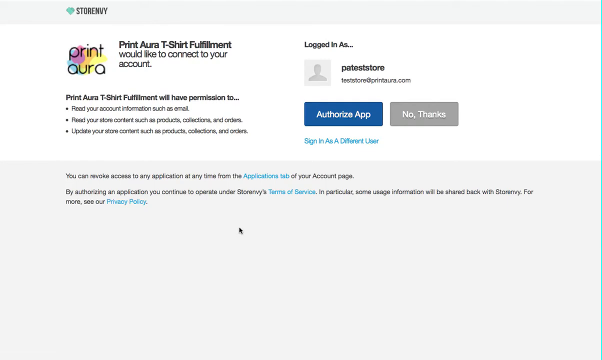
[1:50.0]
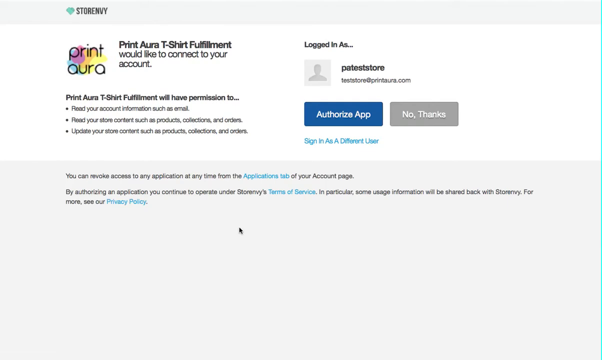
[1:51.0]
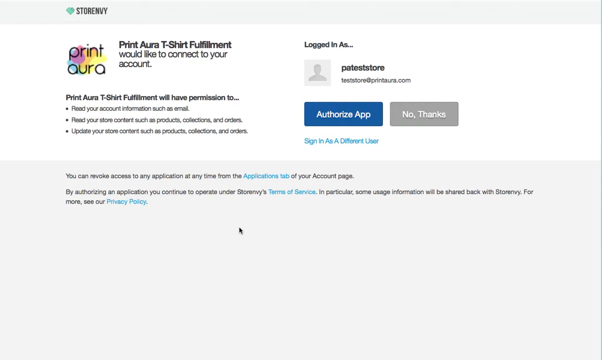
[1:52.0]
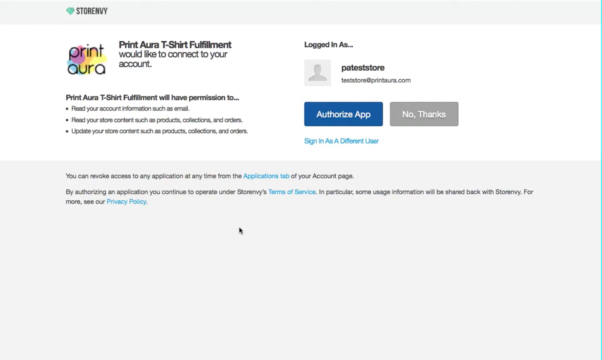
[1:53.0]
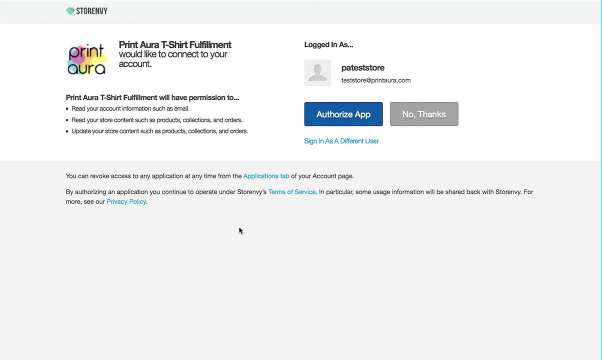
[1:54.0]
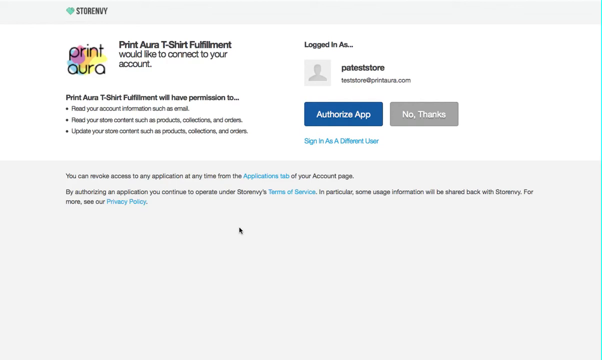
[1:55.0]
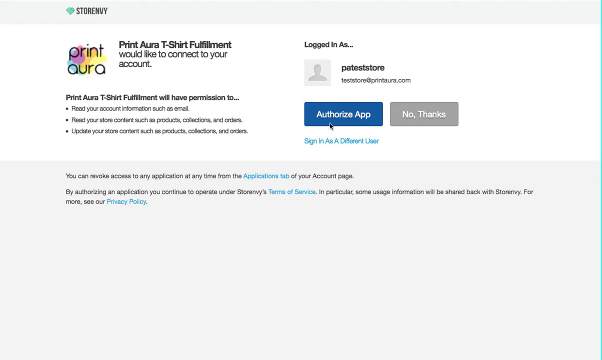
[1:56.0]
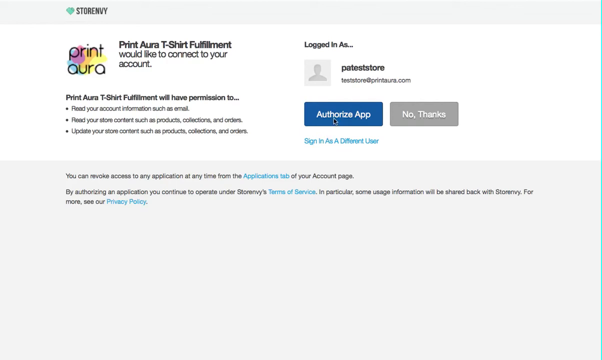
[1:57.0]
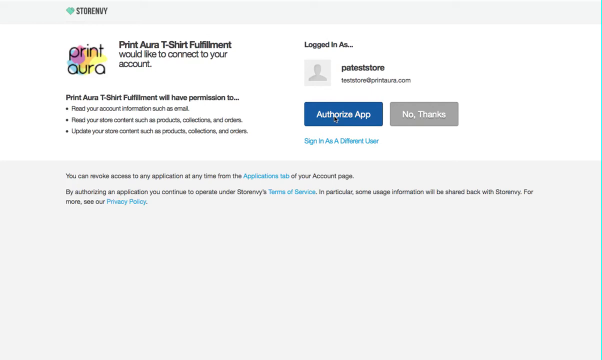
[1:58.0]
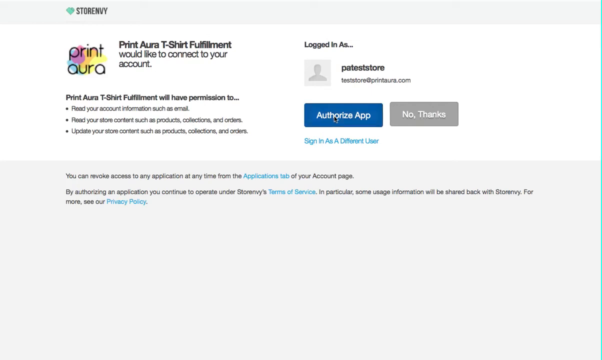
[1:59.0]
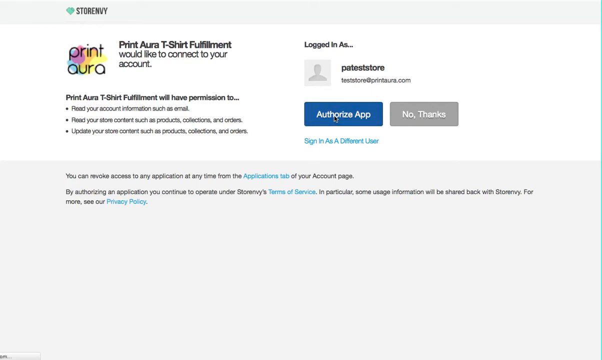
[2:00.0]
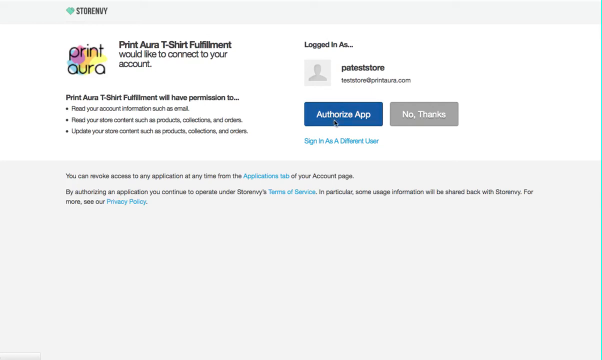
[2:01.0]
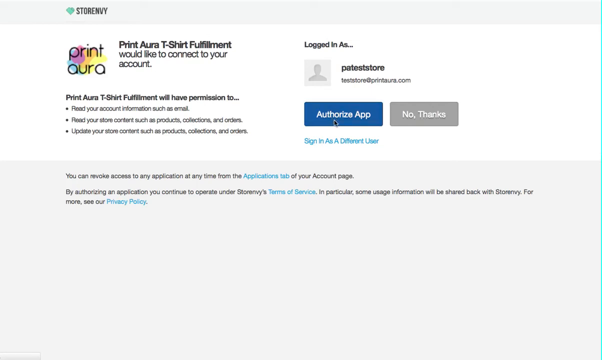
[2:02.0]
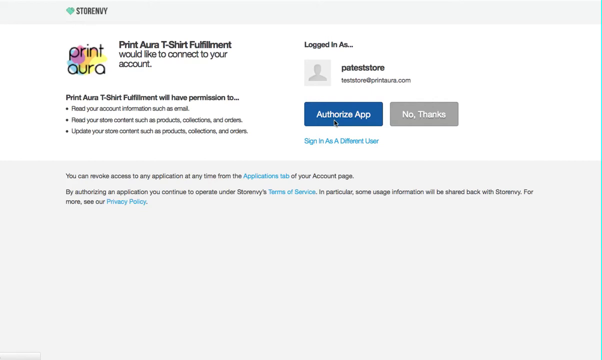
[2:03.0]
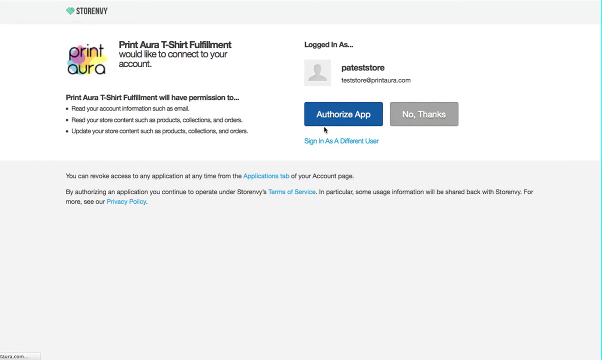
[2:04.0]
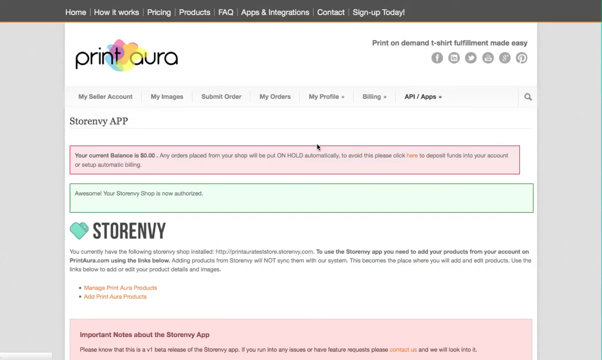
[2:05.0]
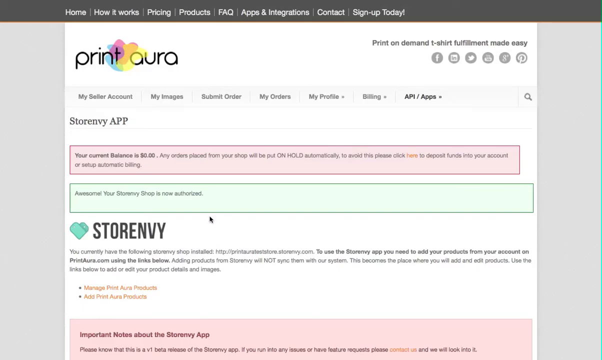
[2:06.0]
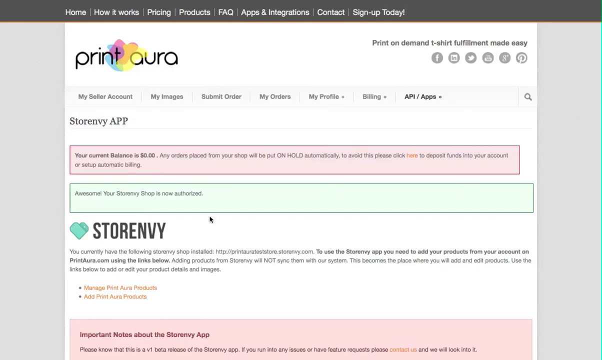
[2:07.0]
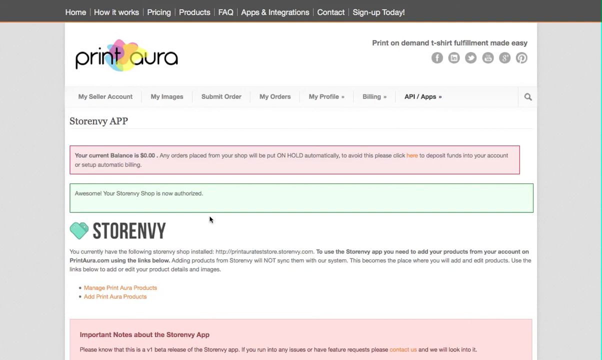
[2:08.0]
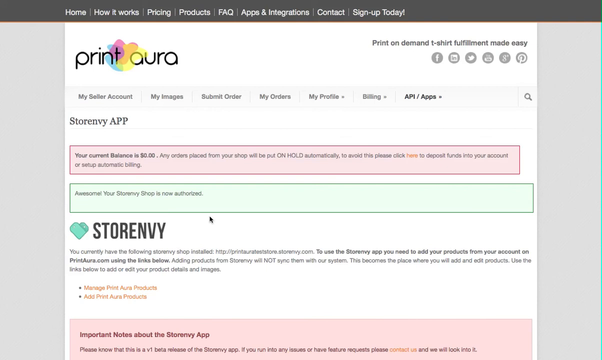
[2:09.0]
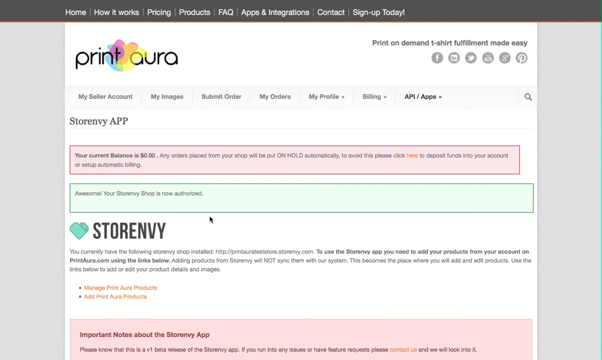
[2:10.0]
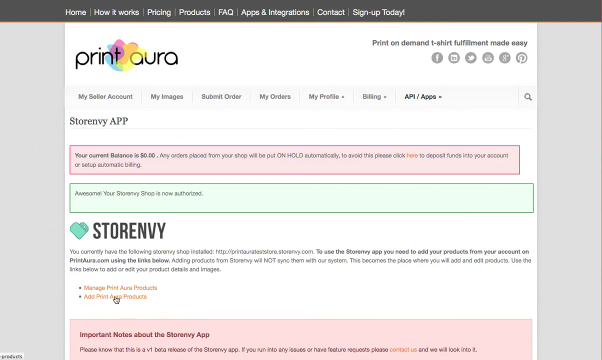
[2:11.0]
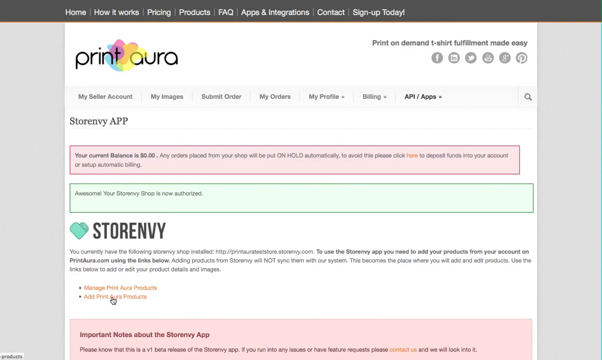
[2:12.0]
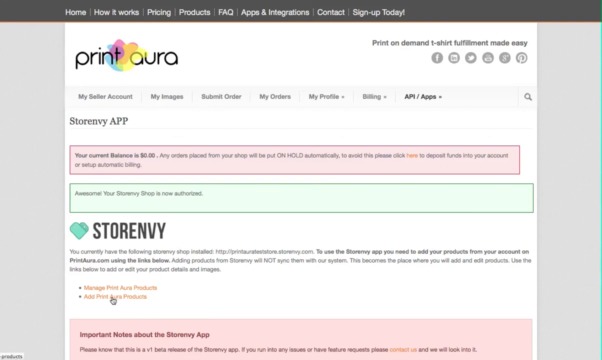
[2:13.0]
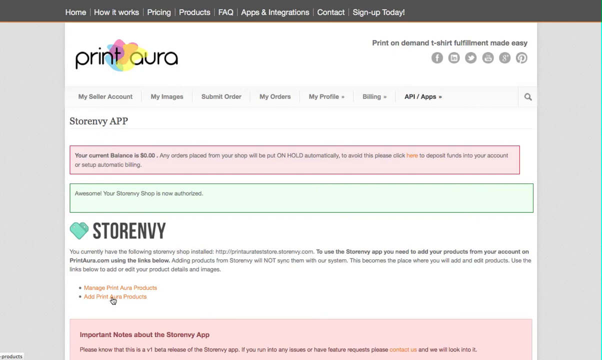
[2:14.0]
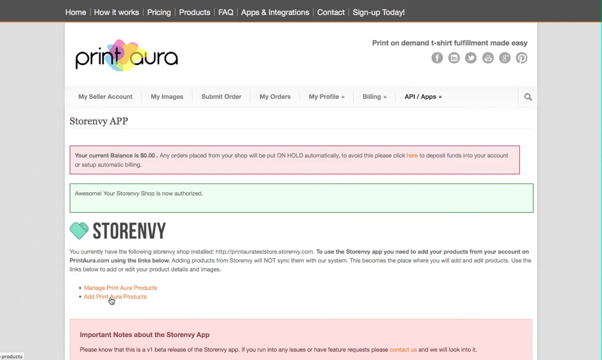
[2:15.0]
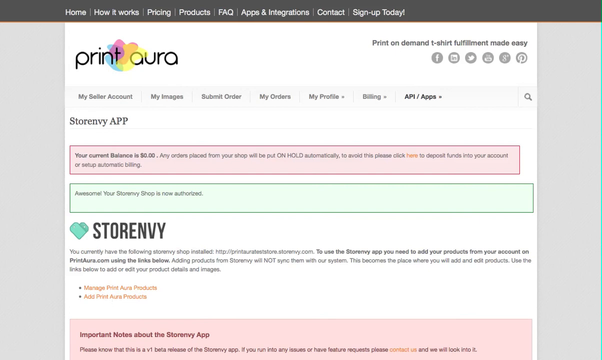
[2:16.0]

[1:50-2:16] On the app authorization page for connecting to the account, the user hovers the mouse over the "authorize app" button and clicks it. Next comes the PrintAura store website, showing the Store Envy app. Beneath is black text on a red background reading "your current balance is zero," and beneath that black text in a green box reading "your Store Envy shop is now authorised." Under that is the Store Envy logo, some text, and two orange buttons: "Manage Print Aura Products" and "Add Print Aura Products." The user hovers the mouse over the "Add Print Aura Products" button. The page also has a grey top banner reading "Home, how it works, pricing, products, FAQ, apps and integrations, contact" and "sign up today." At the top right it reads "print on demand t-shirt fulfillment made easy," with social media logos for Facebook, LinkedIn, Twitter, Google and Pinterest just beneath. Below that is a tab bar with an account tab and "my images, submit order, my orders, my profile, billing and api and apps."